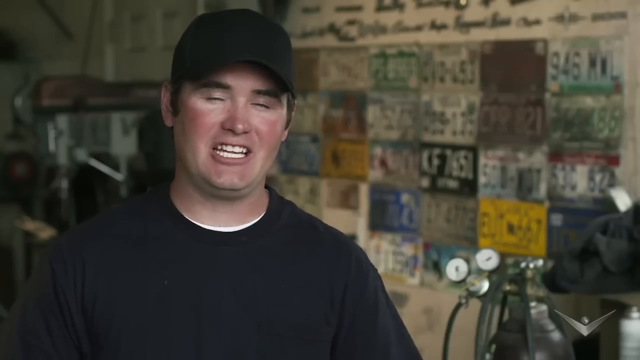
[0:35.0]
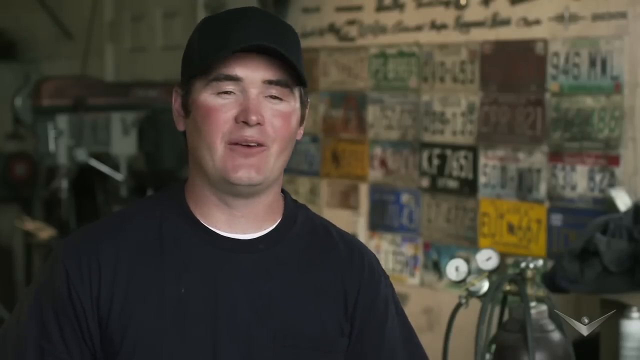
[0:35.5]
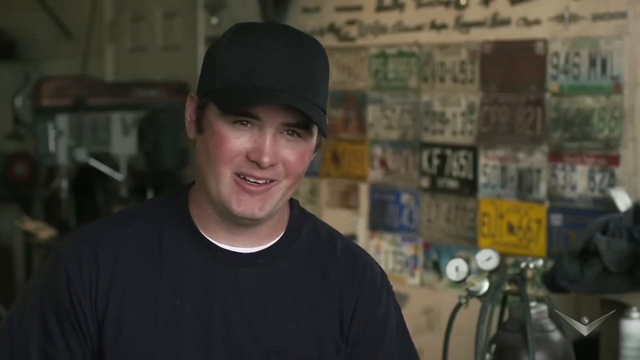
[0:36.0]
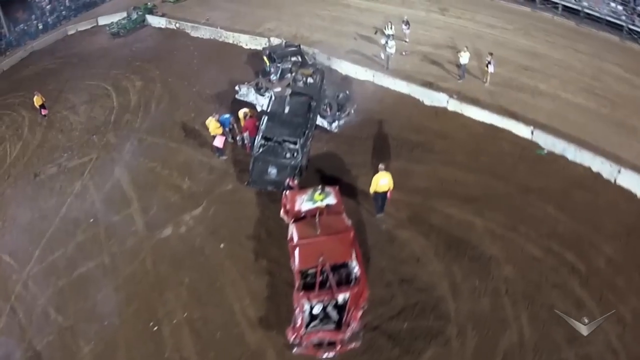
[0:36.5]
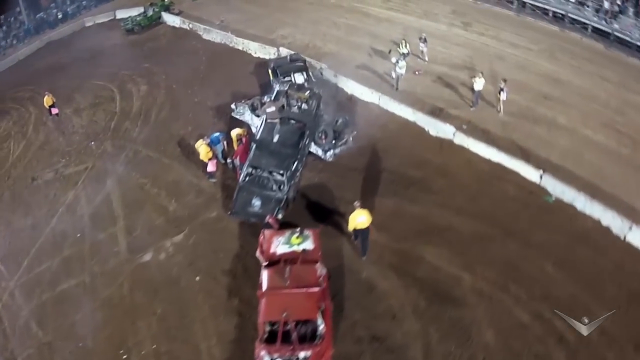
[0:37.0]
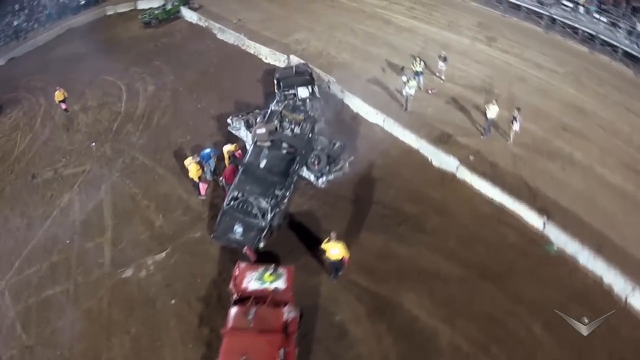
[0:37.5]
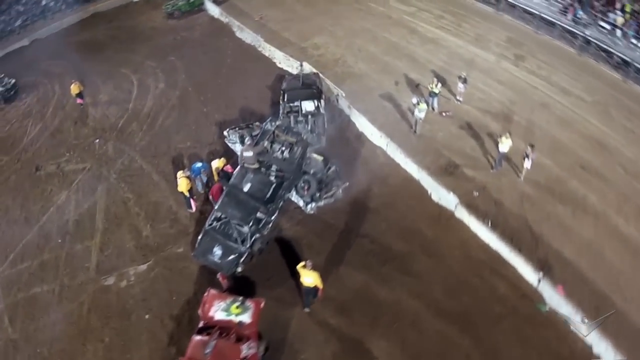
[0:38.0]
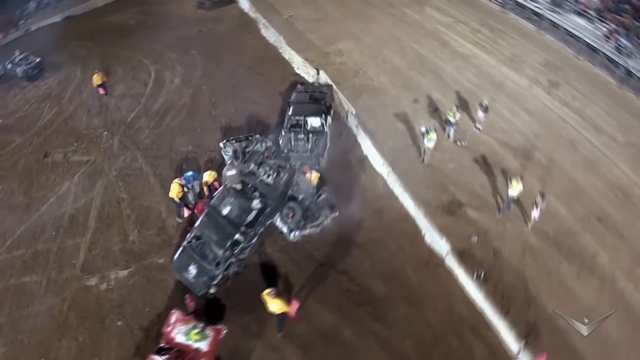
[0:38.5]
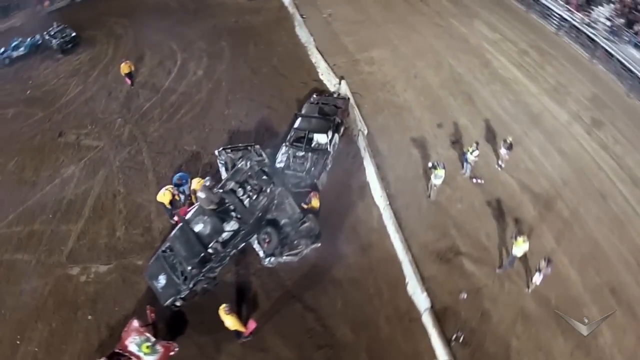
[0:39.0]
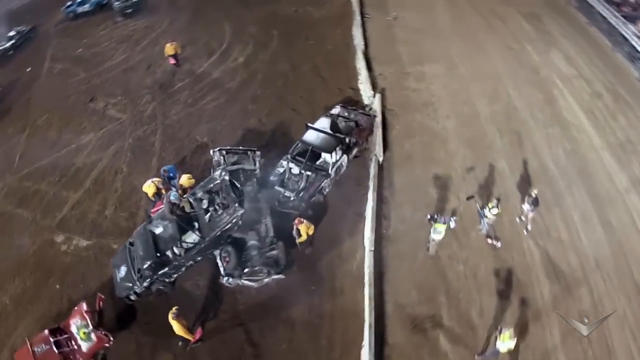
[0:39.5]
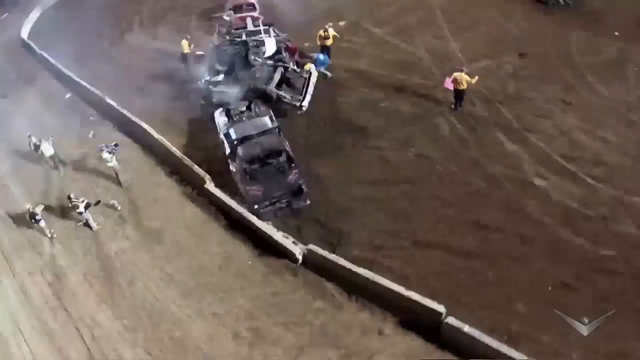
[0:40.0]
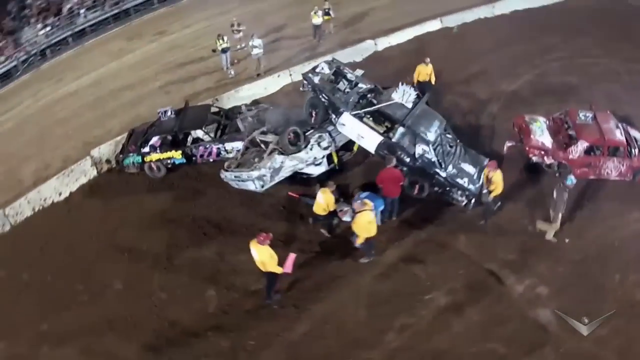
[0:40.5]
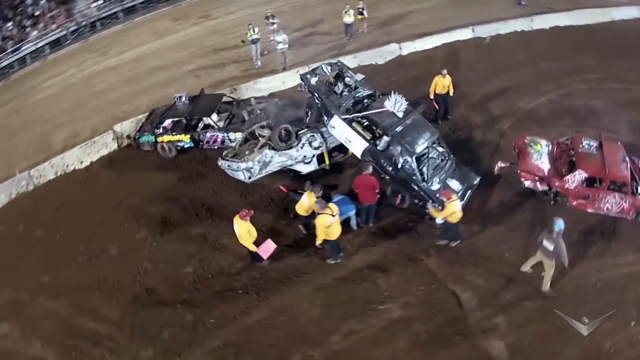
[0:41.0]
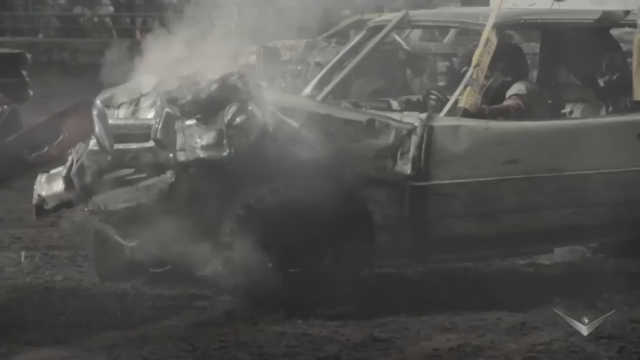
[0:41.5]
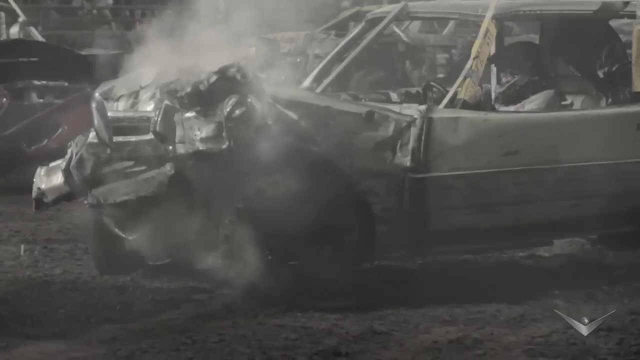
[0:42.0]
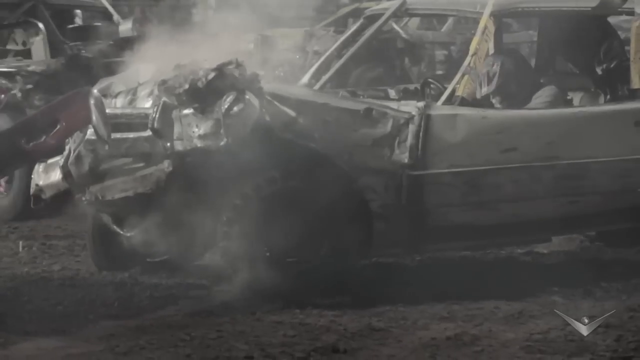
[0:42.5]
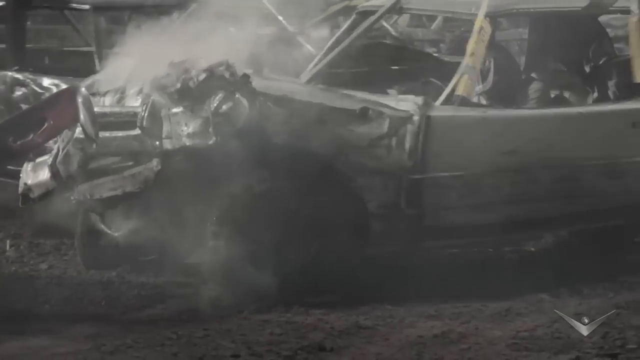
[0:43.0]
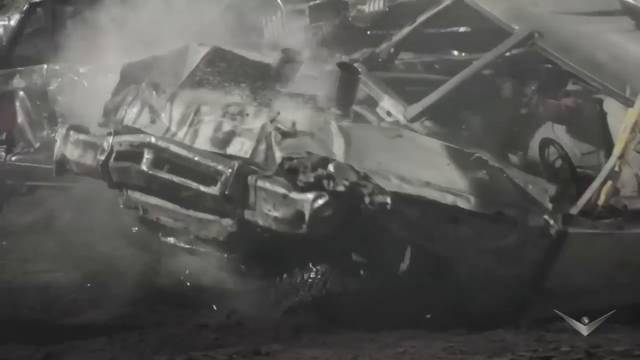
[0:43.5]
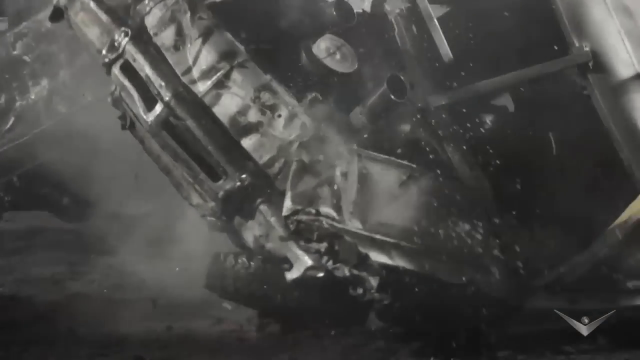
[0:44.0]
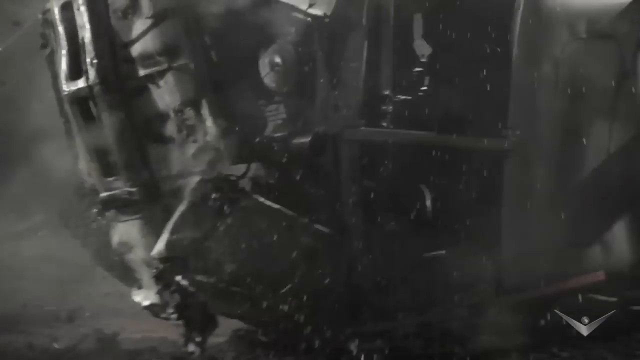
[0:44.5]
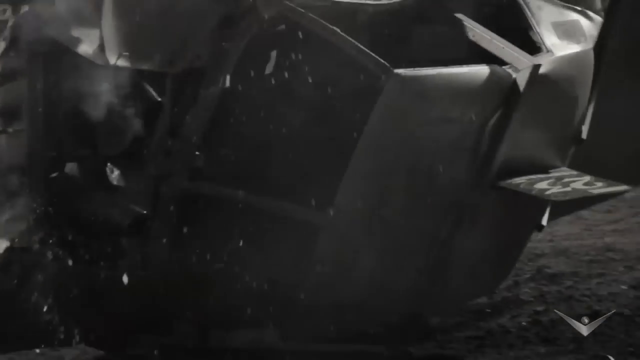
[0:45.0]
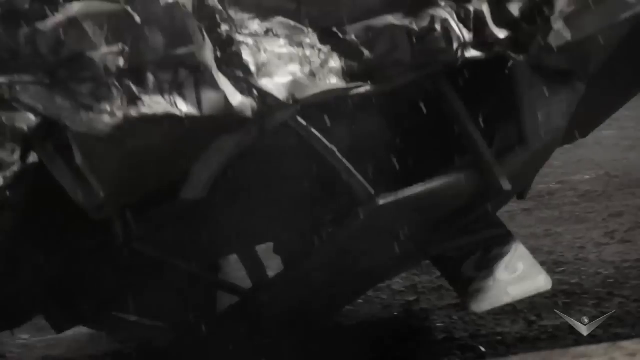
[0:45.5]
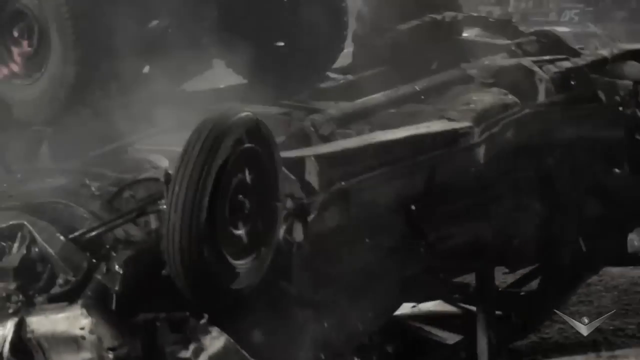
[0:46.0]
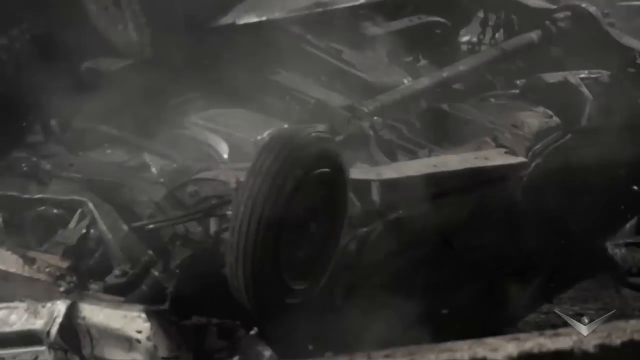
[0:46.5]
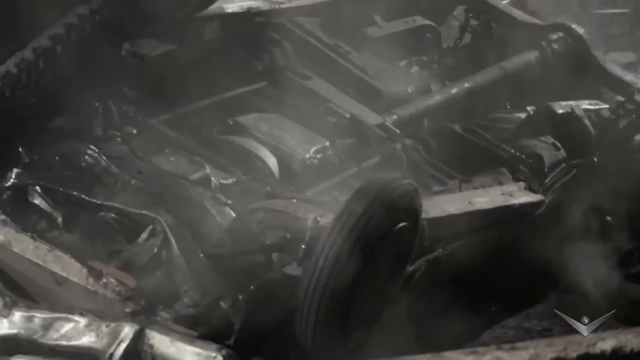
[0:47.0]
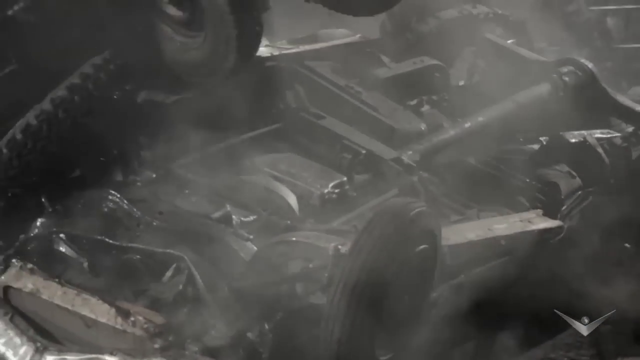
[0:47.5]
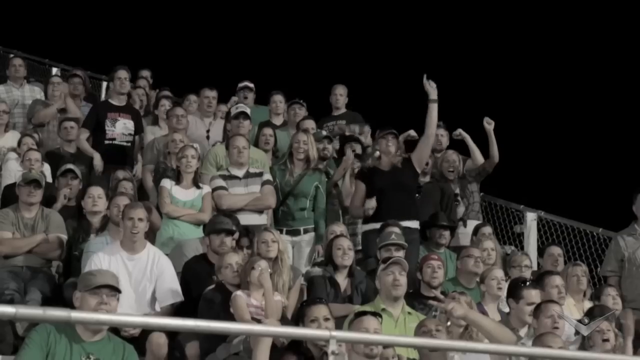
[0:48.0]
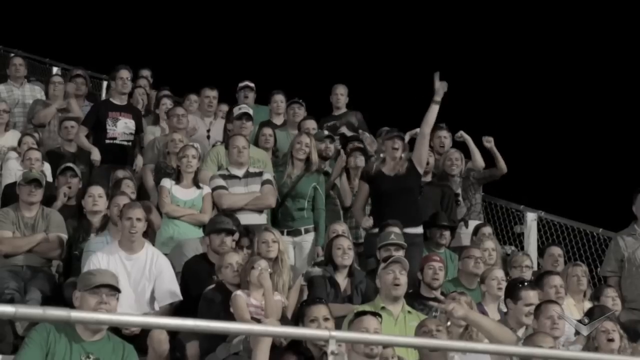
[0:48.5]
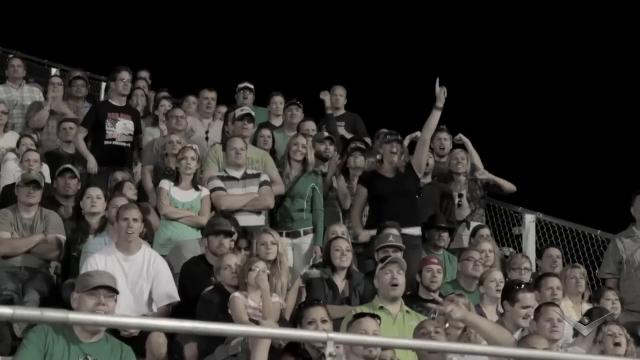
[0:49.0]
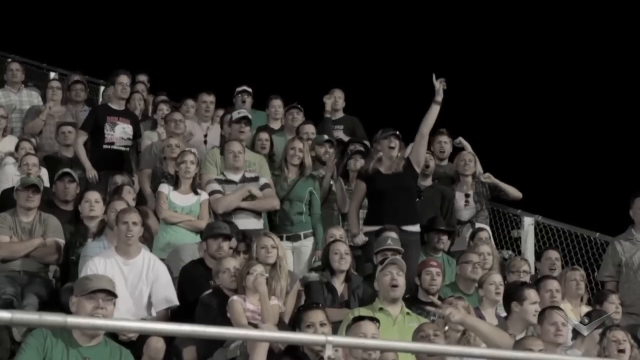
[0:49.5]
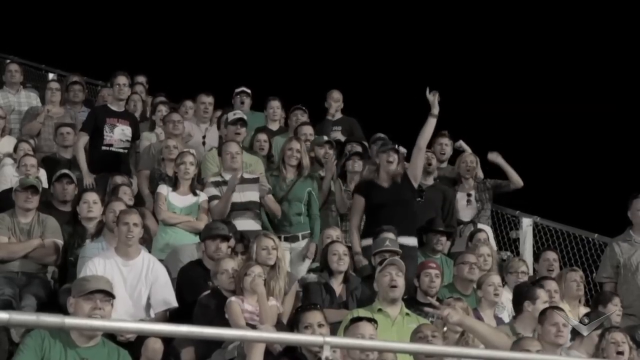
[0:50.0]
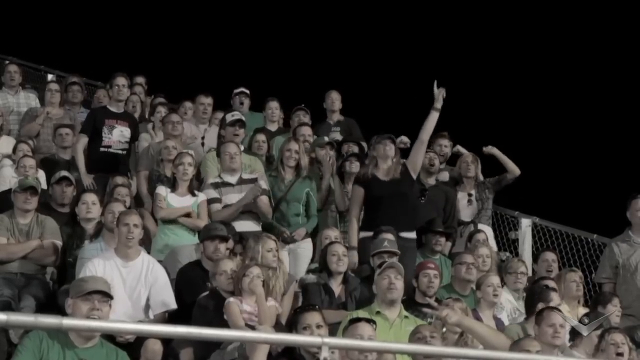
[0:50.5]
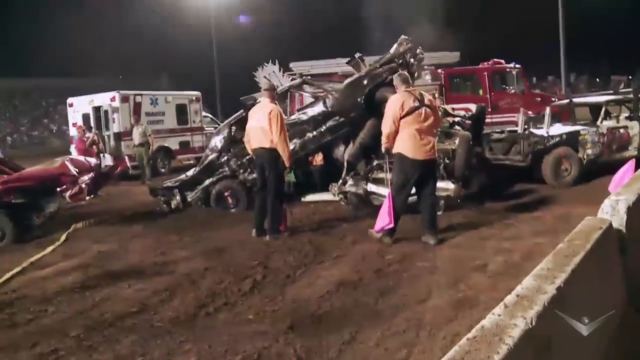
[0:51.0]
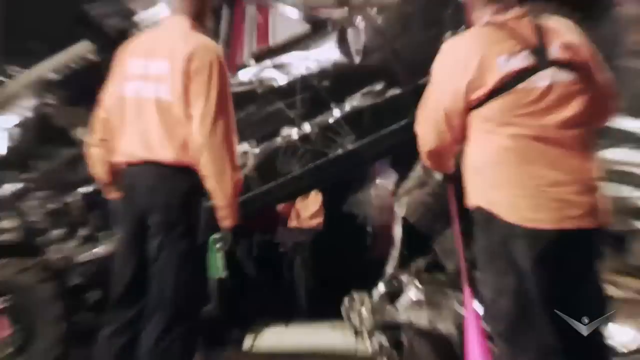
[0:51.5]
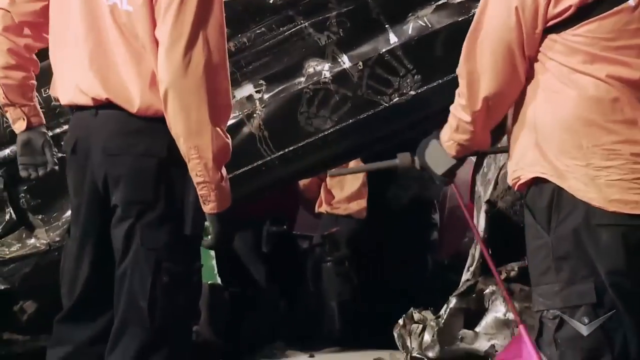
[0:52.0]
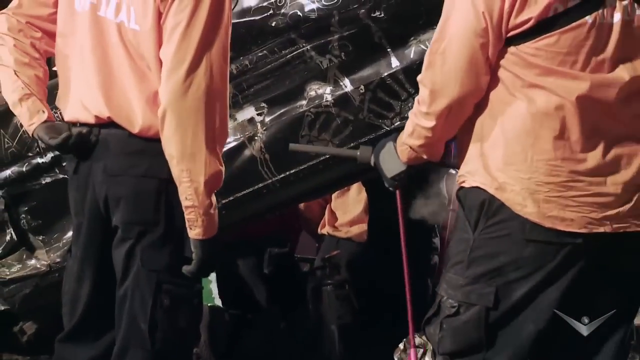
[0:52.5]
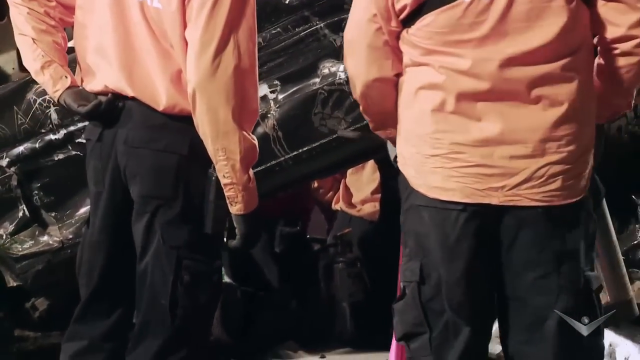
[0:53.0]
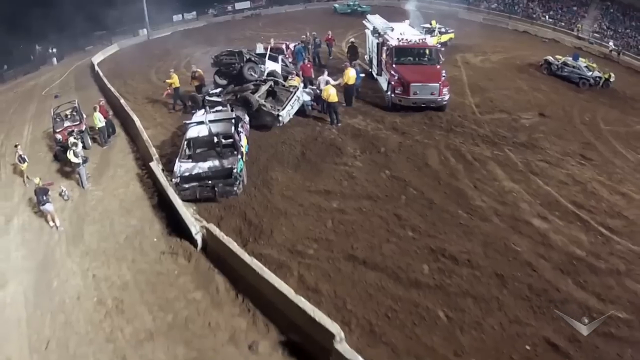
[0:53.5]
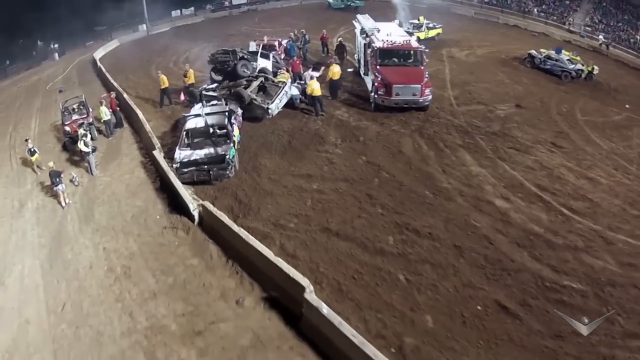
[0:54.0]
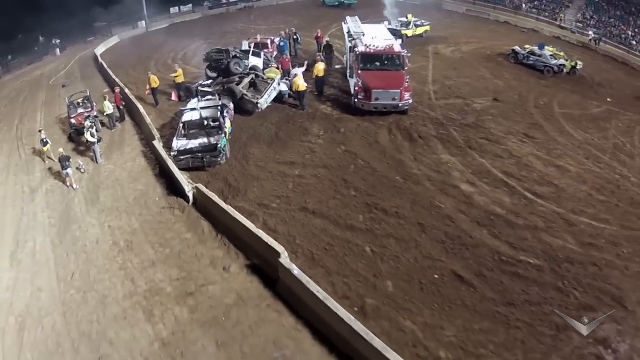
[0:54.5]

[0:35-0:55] The man in the black hat is talking, very excited and smiling. Replays show a black car smashing into the car of the man in the white hat and orange shirt, a white car that no longer moves and whose engine is smoking, turning it over. A group of men gathers around to make sure everybody comes out safely, and apparently a fire truck or water truck comes by spraying everything so nothing catches fire, as the driver of the car underneath is gotten out. The drivers apparently wear helmets and protective gear, and the driver who was hit sees the car coming right at him and braces himself. The man in the black hat, presumably the driver of the black car, is ecstatic and very happy as he talks. The crowd is shown, focusing on one white, blonde woman in a black shirt with a white shirt underneath, similar to the black shirt with a white shirt underneath worn by the man in the black hat, who looks to be in his mid-forties. Her age is unclear. She is the happiest, jumping up and down for joy from the beginning, while everyone else stands still and claps before erupting. She is possibly his partner.